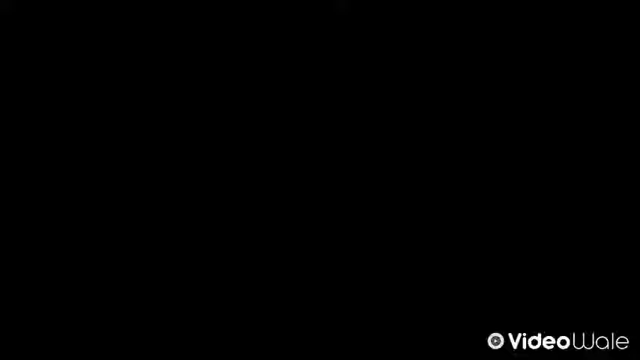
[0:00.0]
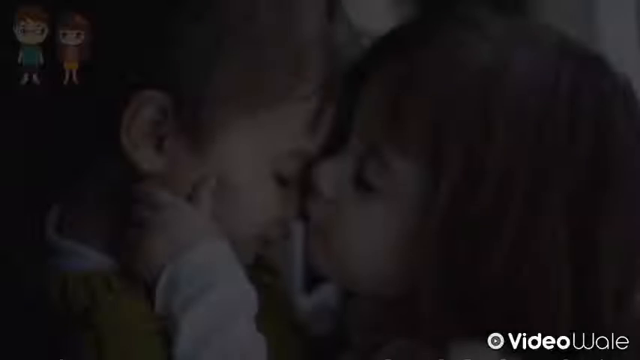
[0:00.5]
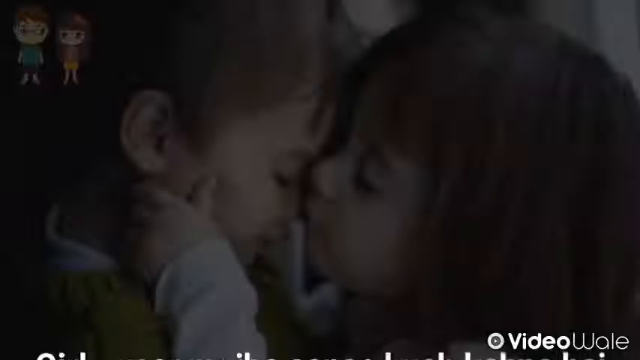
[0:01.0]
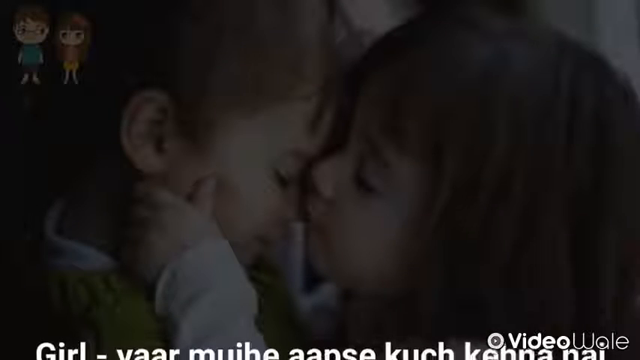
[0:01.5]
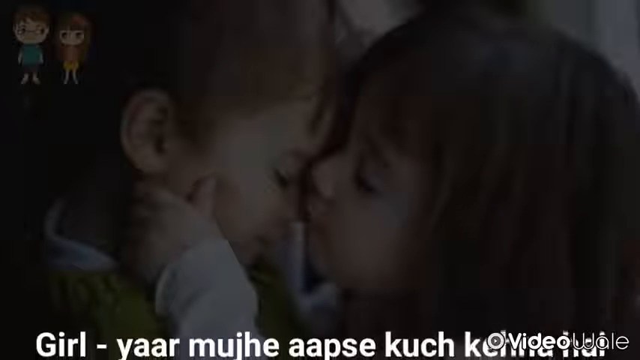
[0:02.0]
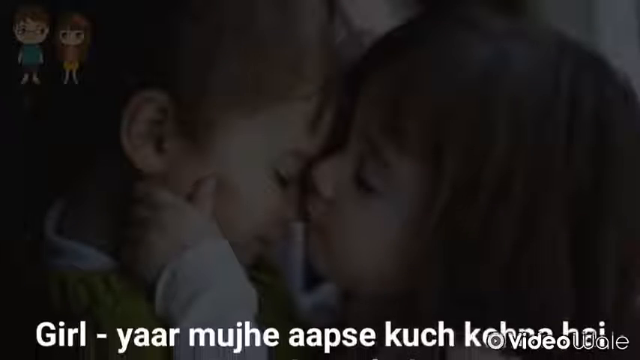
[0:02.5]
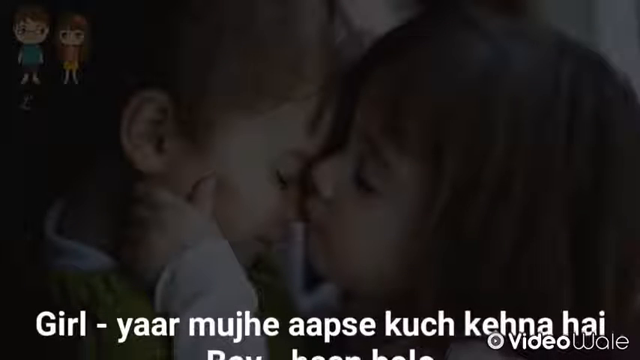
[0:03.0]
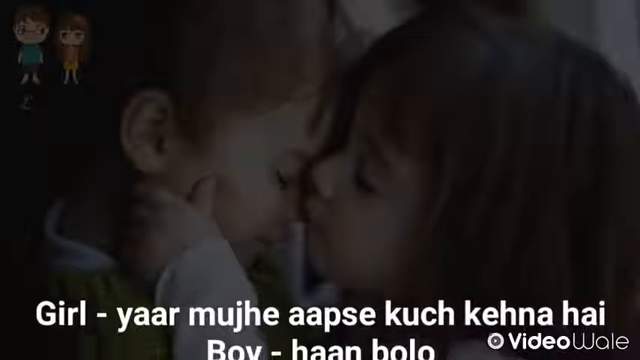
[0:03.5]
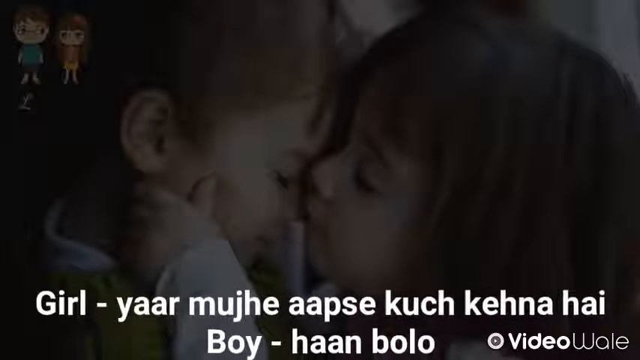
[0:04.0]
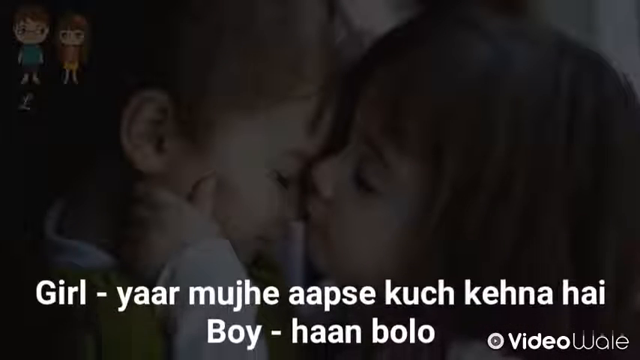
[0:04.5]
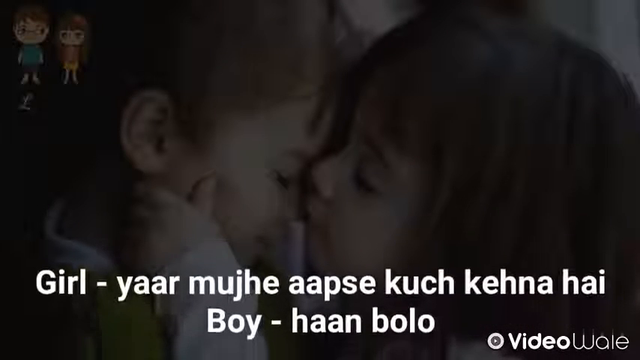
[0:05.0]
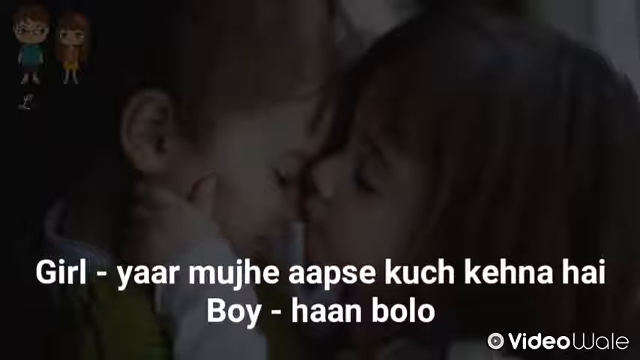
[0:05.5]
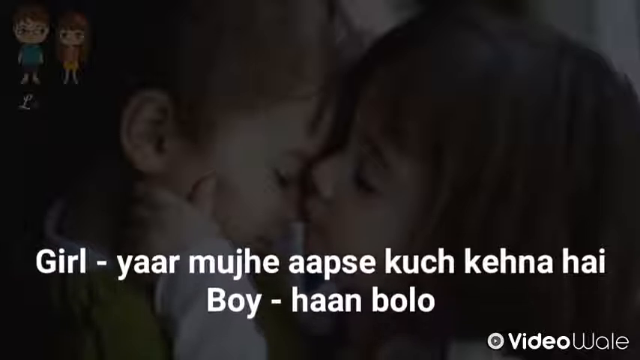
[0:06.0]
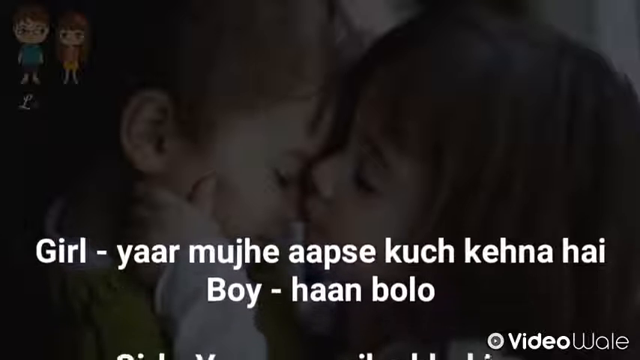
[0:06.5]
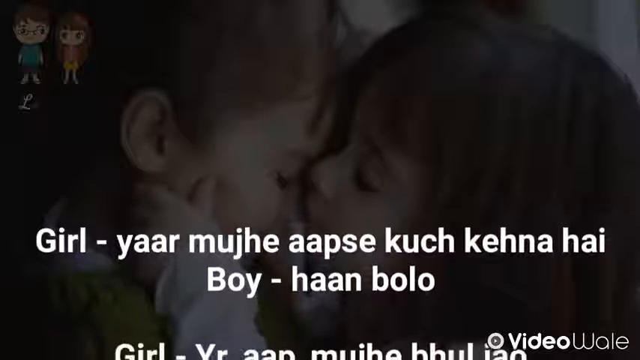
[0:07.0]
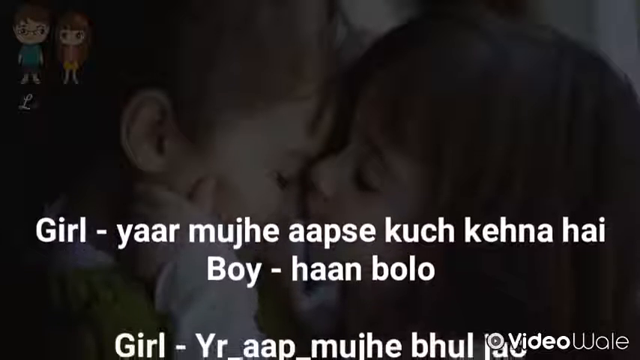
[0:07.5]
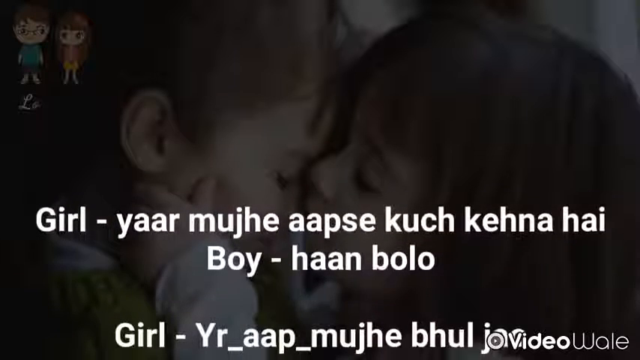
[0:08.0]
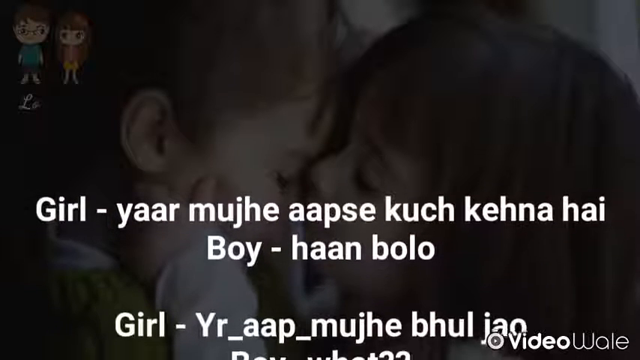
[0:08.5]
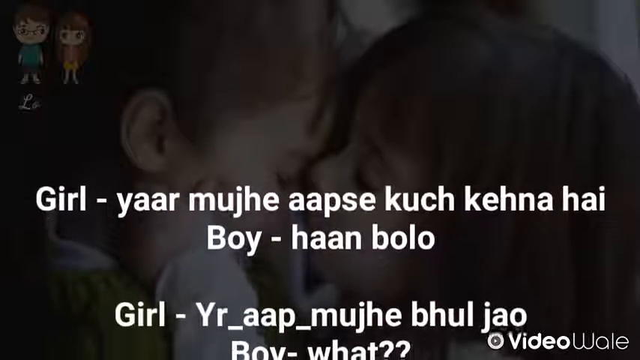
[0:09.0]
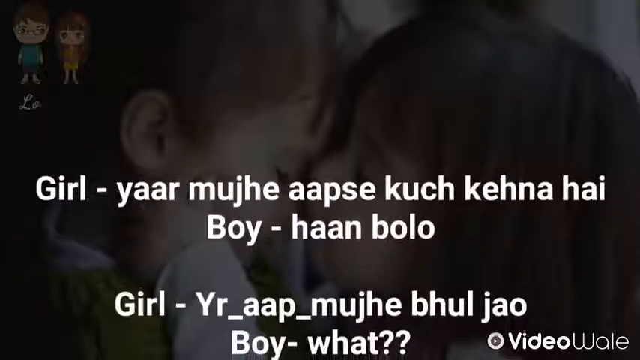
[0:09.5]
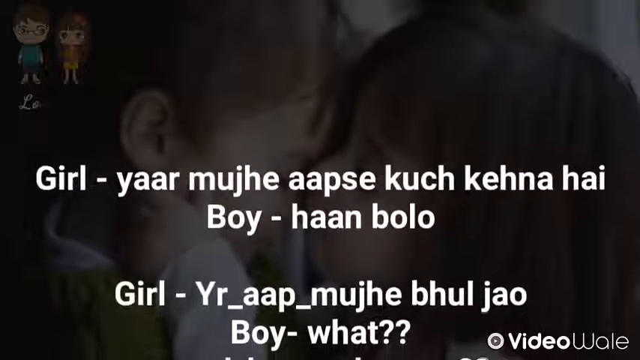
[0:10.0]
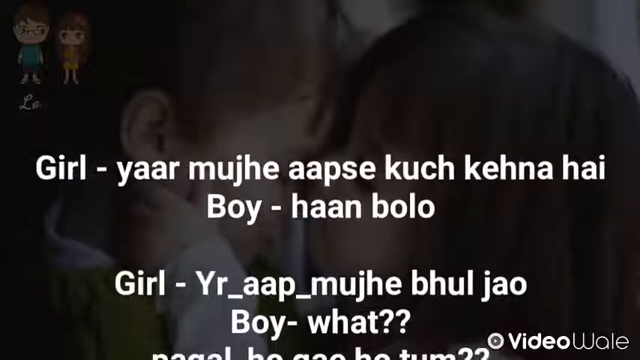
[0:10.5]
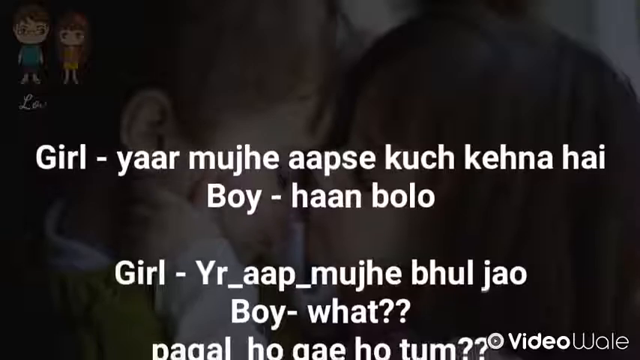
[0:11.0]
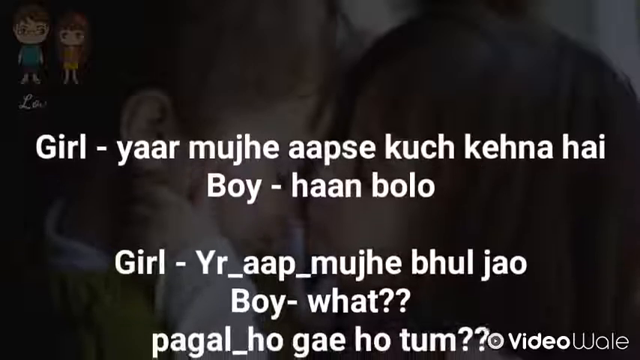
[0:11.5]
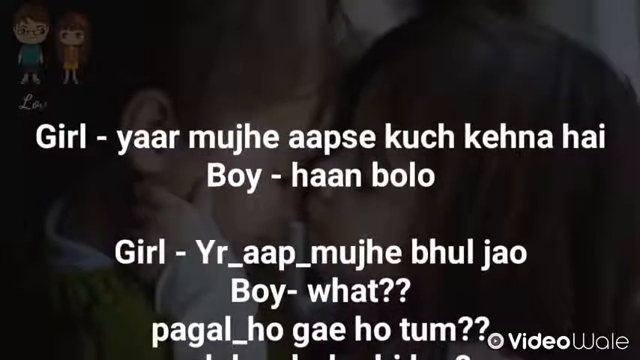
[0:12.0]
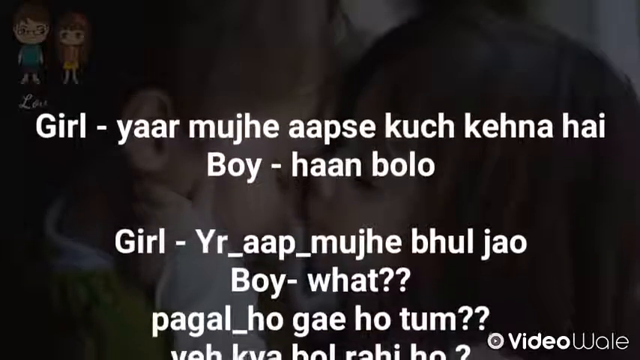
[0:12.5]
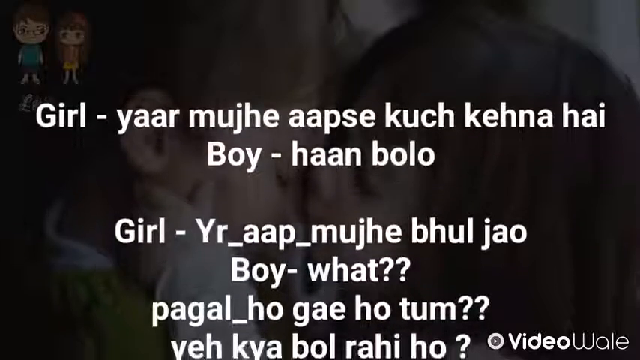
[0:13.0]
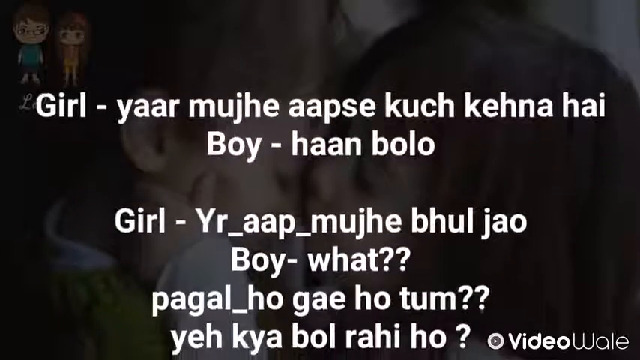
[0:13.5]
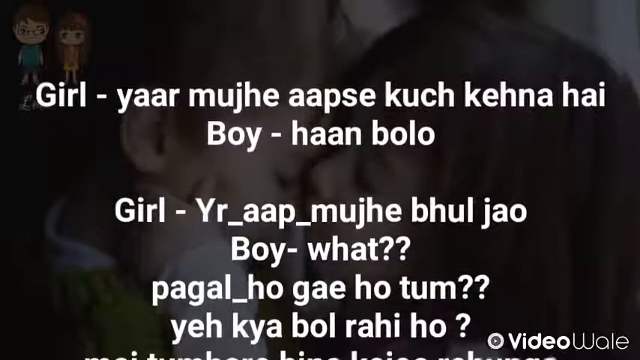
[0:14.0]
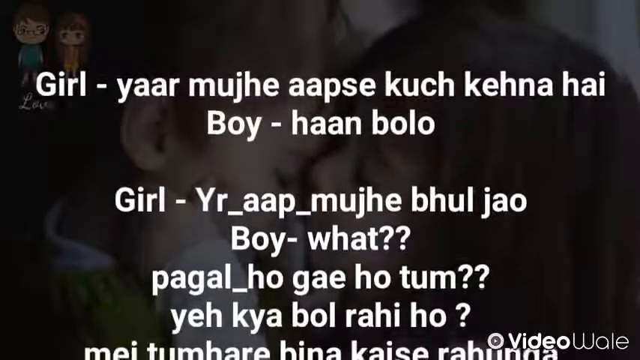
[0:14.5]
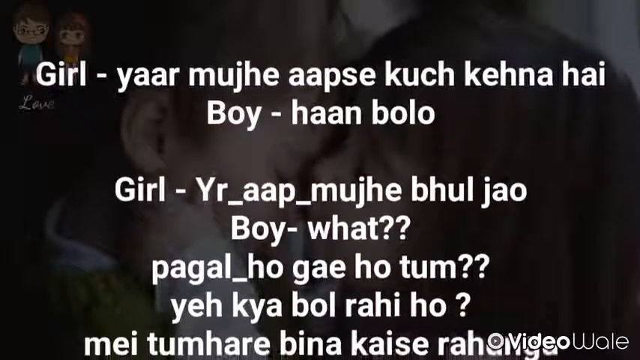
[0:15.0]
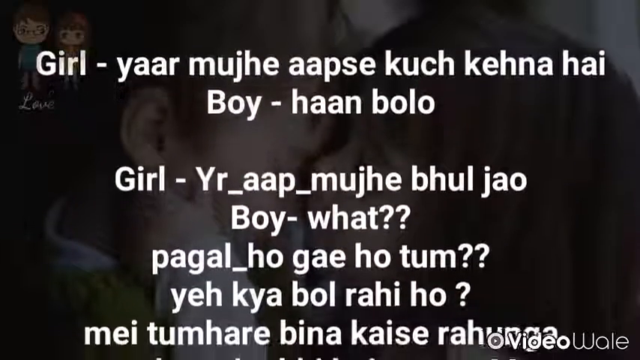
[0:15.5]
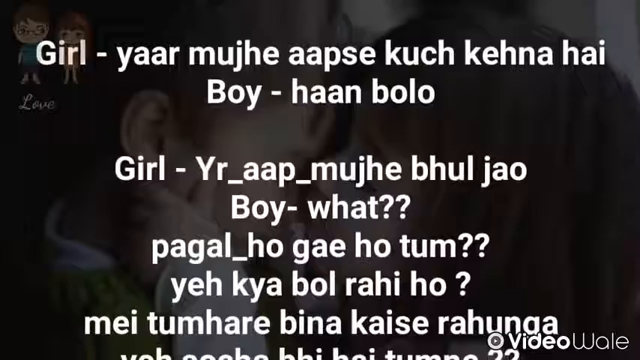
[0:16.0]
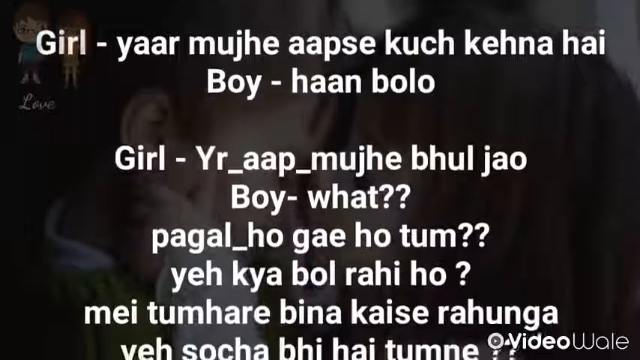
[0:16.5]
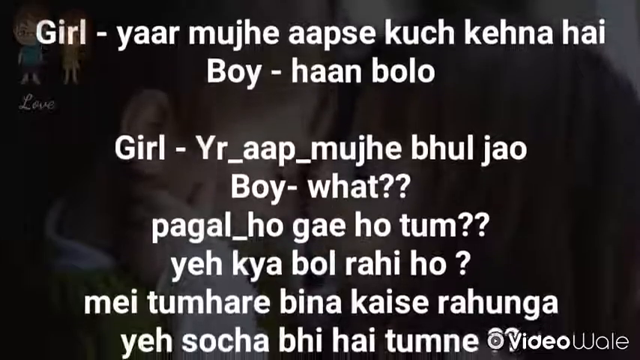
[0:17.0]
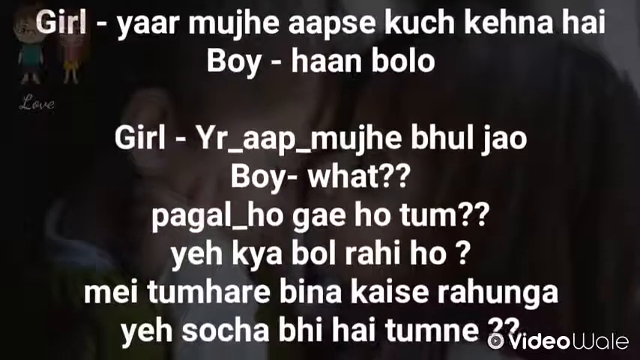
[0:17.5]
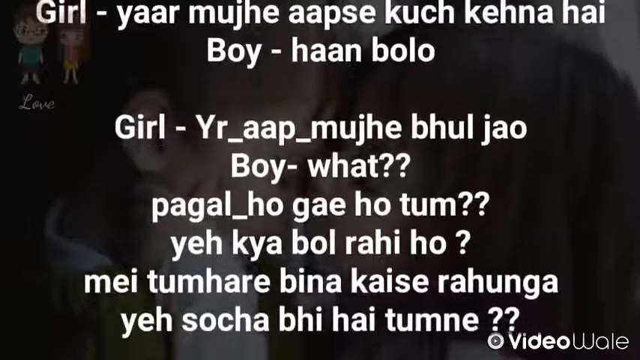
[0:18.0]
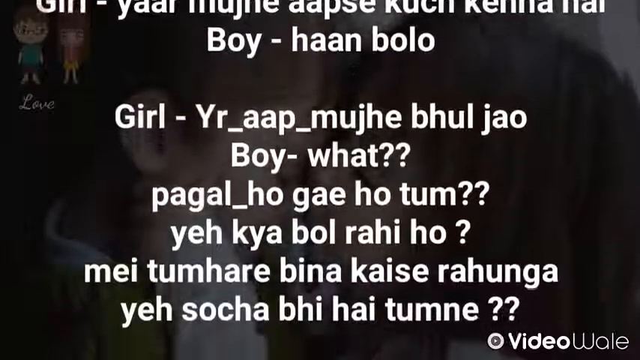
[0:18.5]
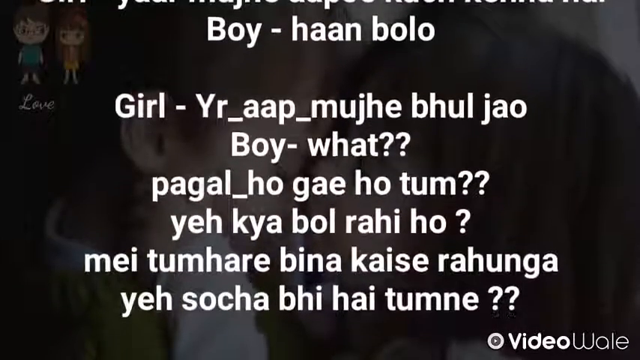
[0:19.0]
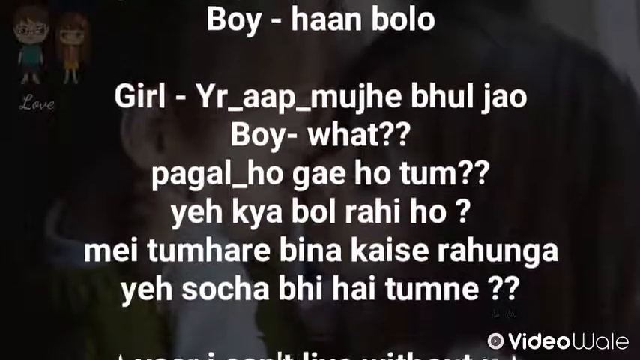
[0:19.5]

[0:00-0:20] Two children with their eyes closed are sleeping in the middle of the frame: a girl on the right and what appears to be a little boy on the left. The girl has dark brown hair and white skin, and her left hand rests on the left side of the little boy's face. The boy also has white skin and short brown hair. In the top left corner are two small cartoon drawings, one of a little boy and one of a little girl. The drawn boy wears a green shirt and blue shorts; the drawn girl wears a more orangish shirt and what looks like a yellow skirt. Text appears at the bottom of the image, reading "girl" followed by words in an unidentified foreign language. The text slowly moves upward toward the top of the screen, where many lines appear, seemingly subtitles of people talking in that foreign language. The text is bold and white.